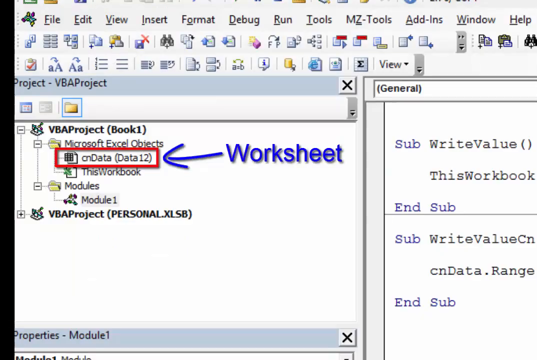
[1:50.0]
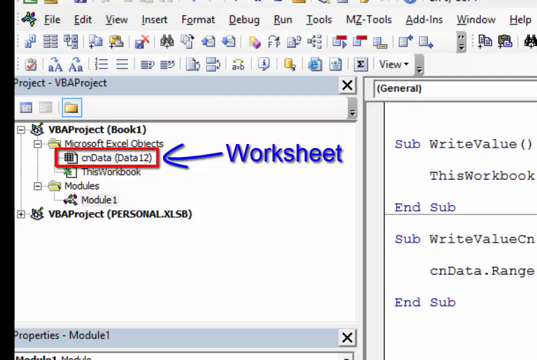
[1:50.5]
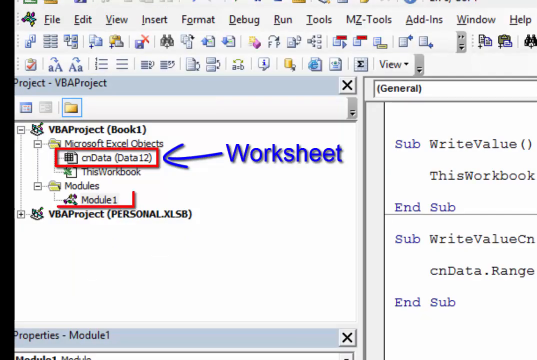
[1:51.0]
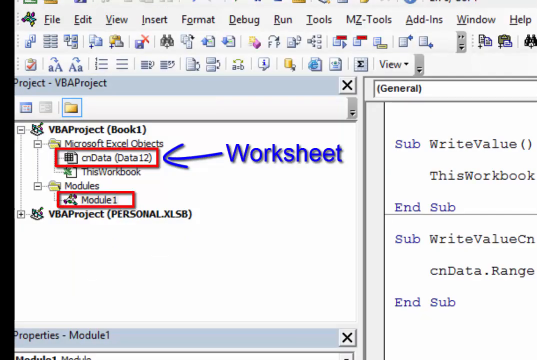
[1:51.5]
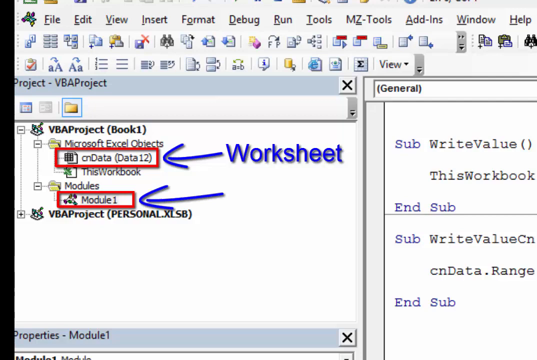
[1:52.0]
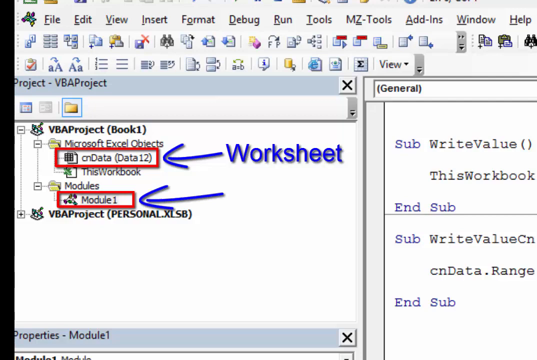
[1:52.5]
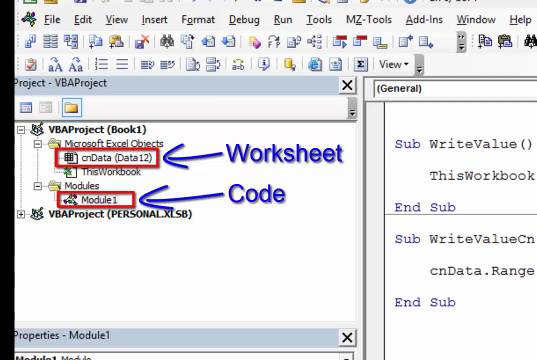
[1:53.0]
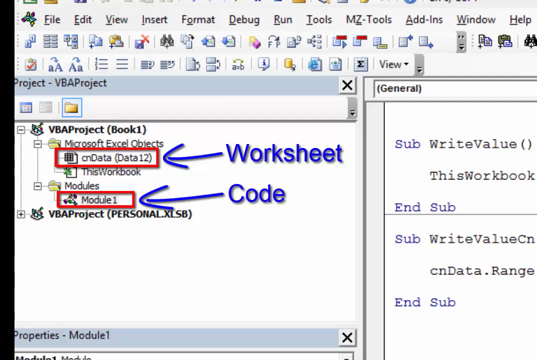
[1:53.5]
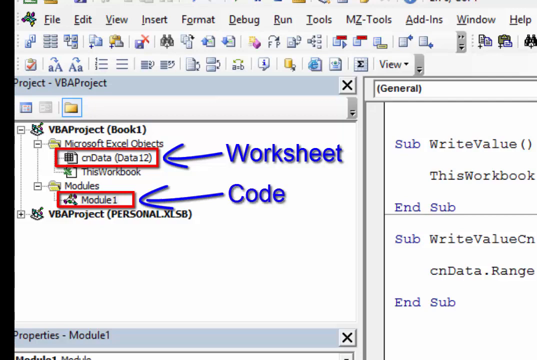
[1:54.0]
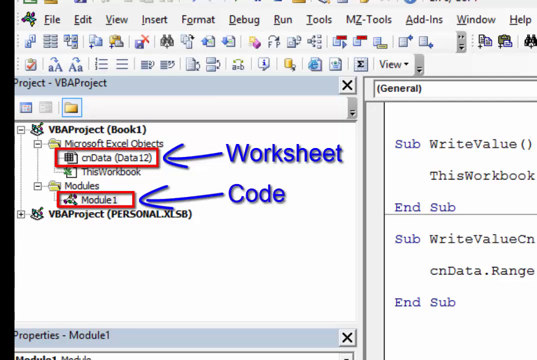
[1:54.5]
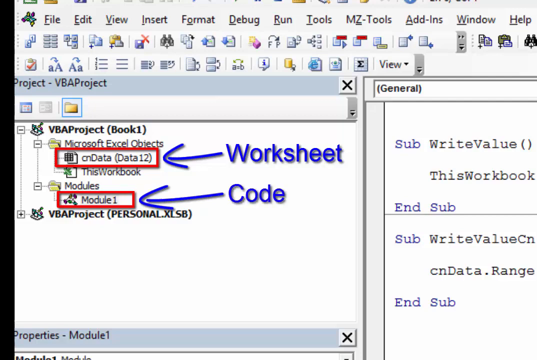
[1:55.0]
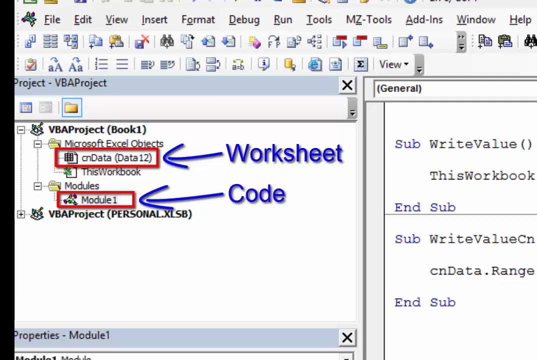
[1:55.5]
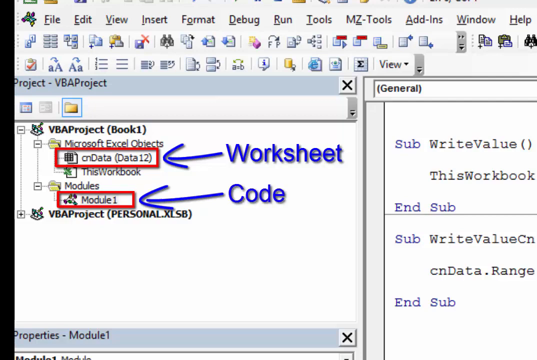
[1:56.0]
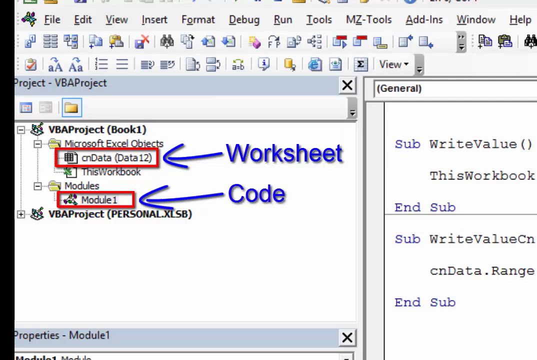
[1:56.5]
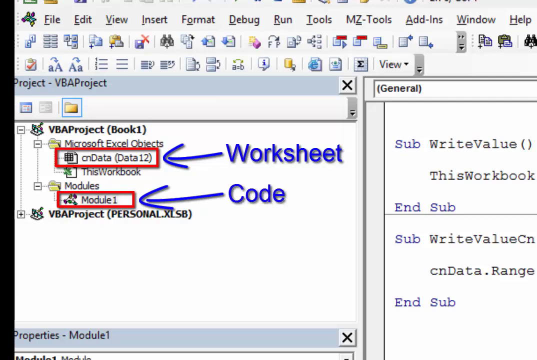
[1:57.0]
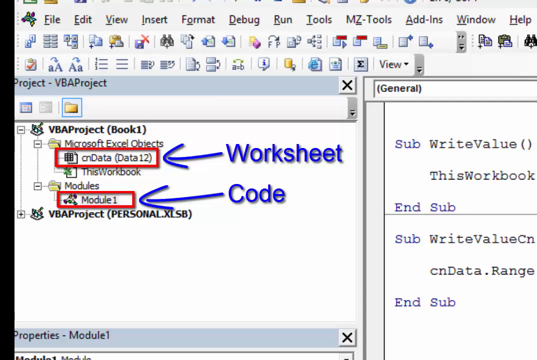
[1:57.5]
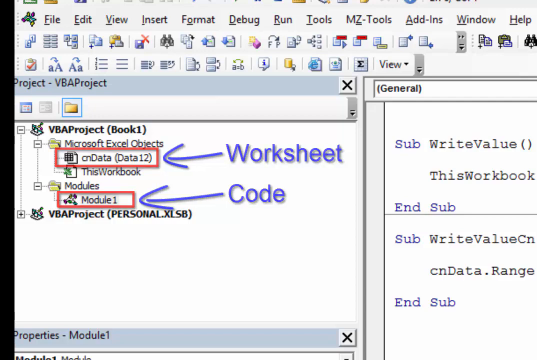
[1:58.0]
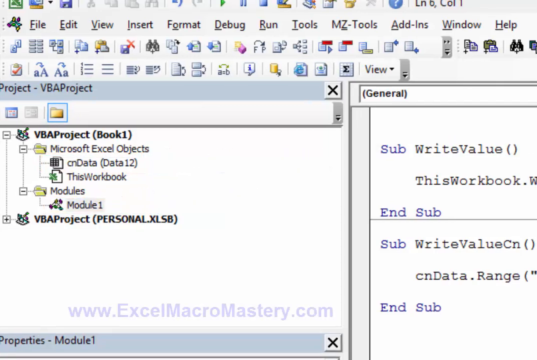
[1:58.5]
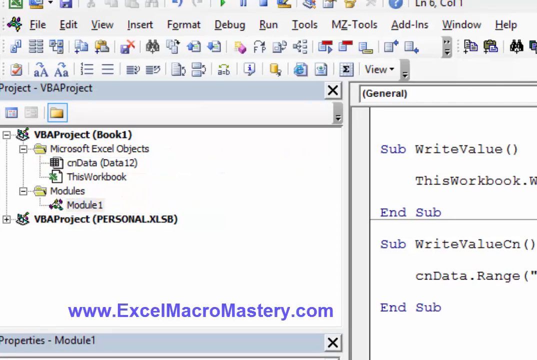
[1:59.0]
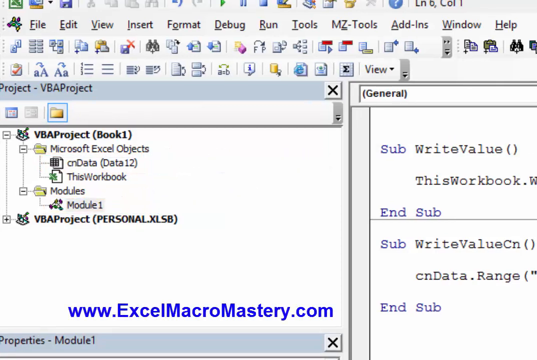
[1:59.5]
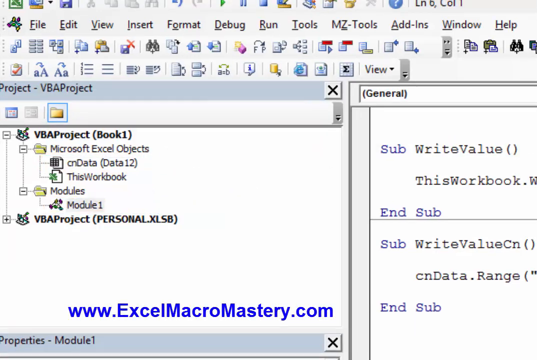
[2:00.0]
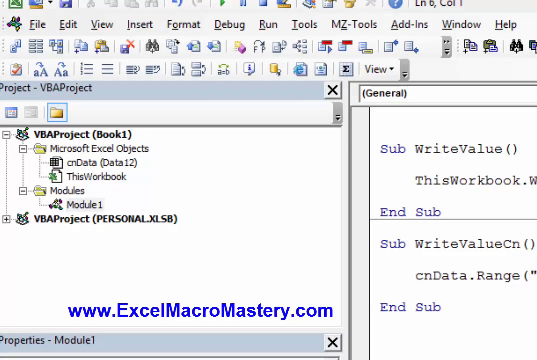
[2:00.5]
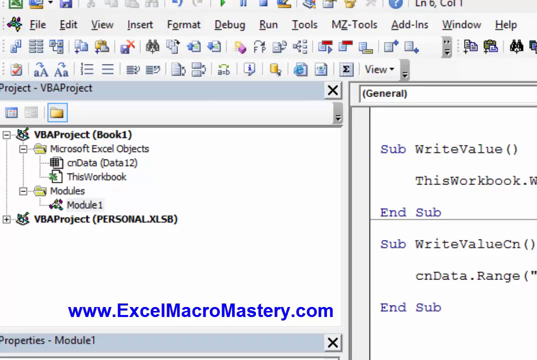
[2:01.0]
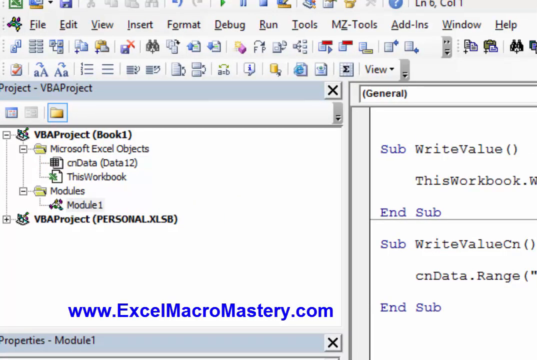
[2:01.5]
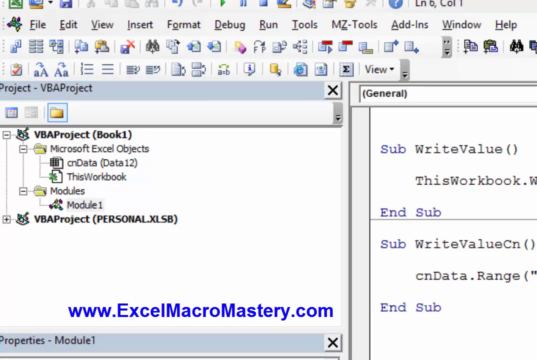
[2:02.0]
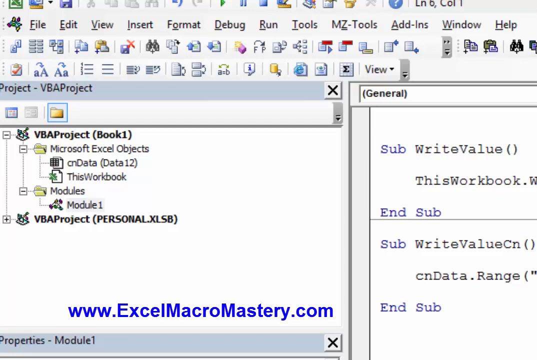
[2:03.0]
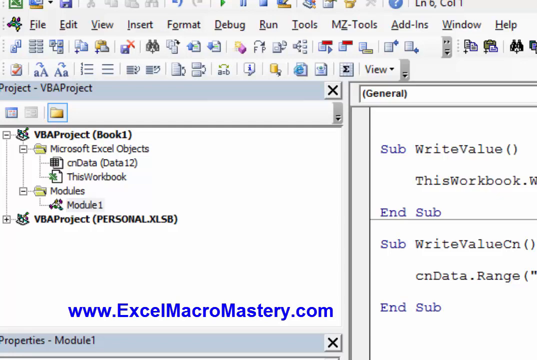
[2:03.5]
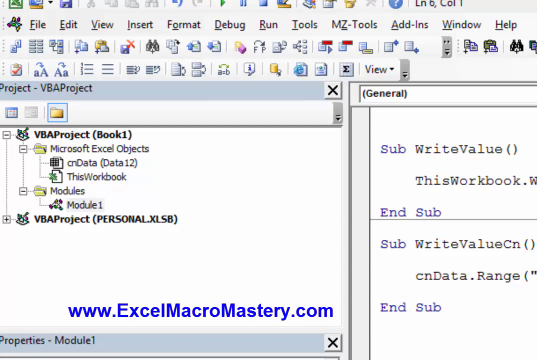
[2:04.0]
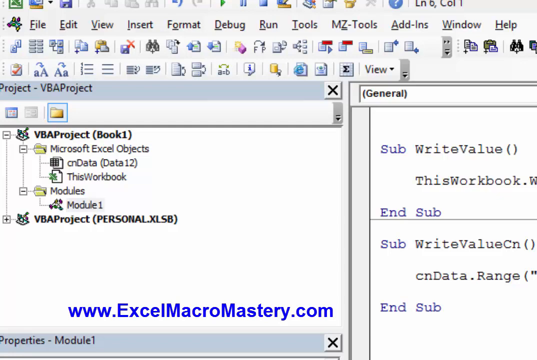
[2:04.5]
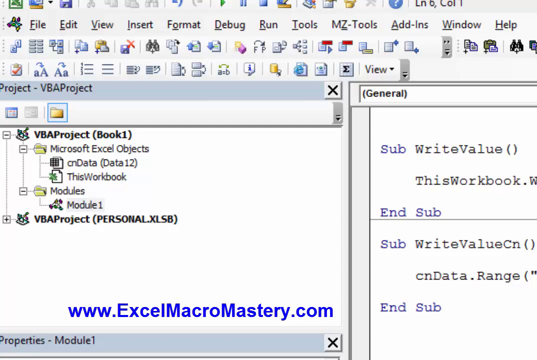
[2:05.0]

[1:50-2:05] From a pull-down list there is a folder named modules, and module one, which contains the code, is selected. A website, www.ezmicromystery.com, is visible.